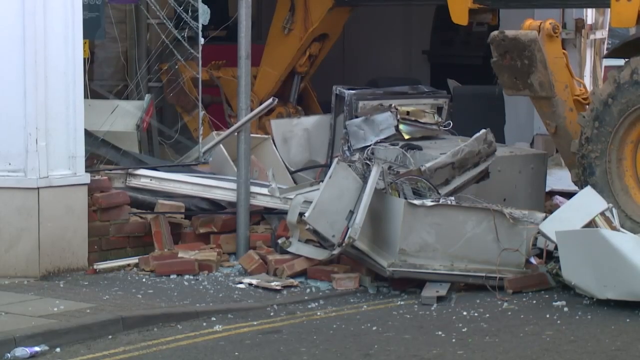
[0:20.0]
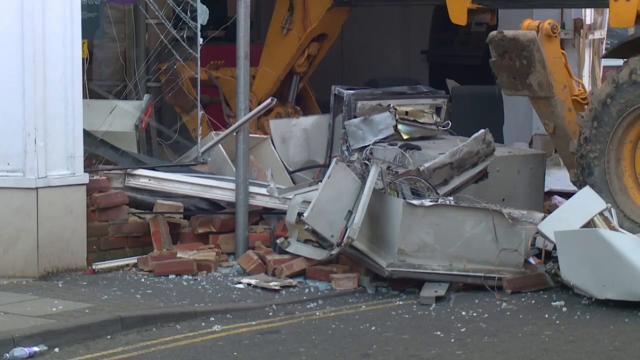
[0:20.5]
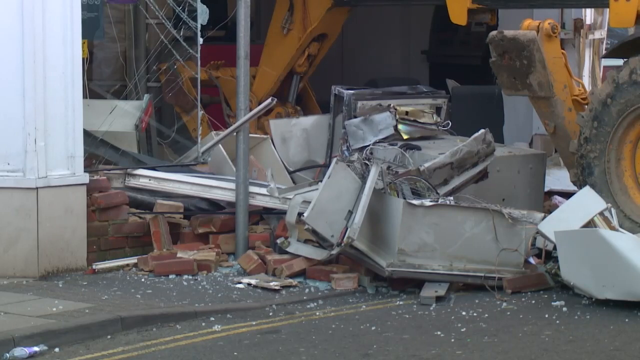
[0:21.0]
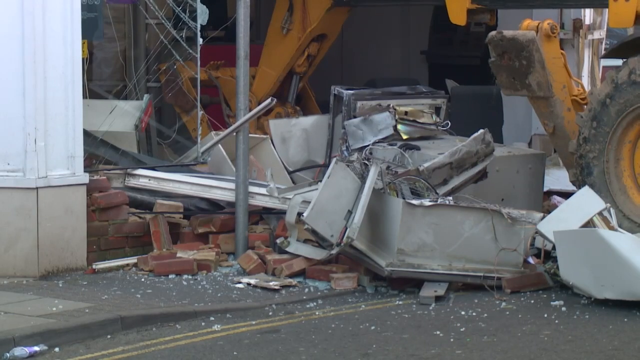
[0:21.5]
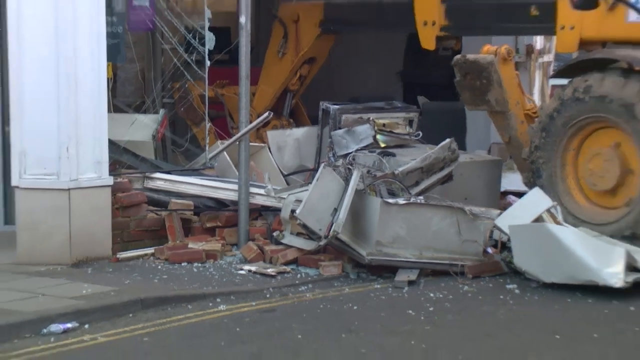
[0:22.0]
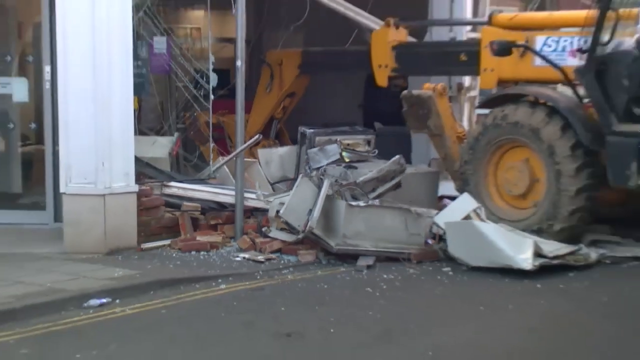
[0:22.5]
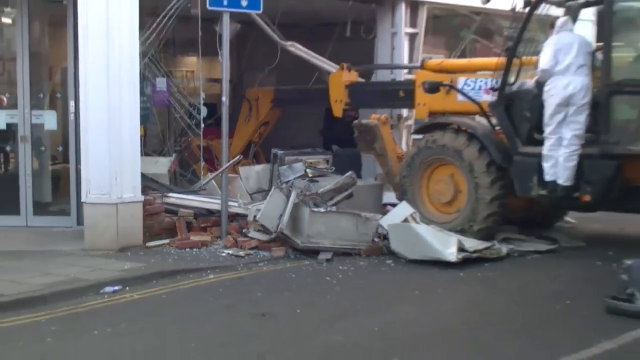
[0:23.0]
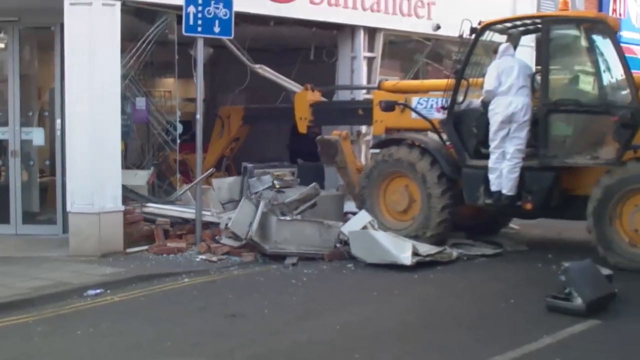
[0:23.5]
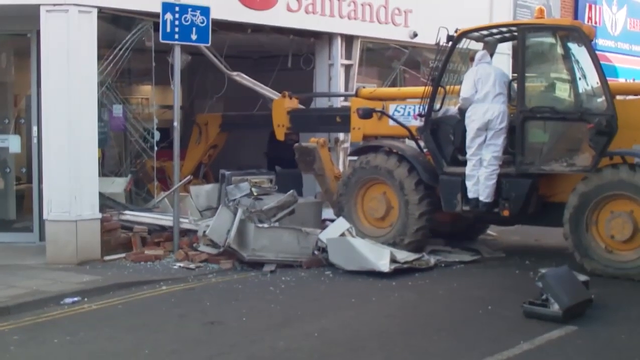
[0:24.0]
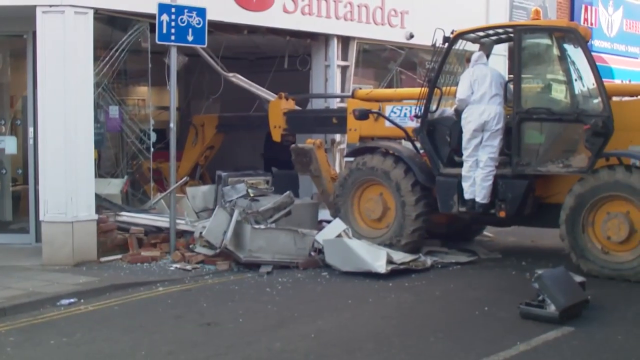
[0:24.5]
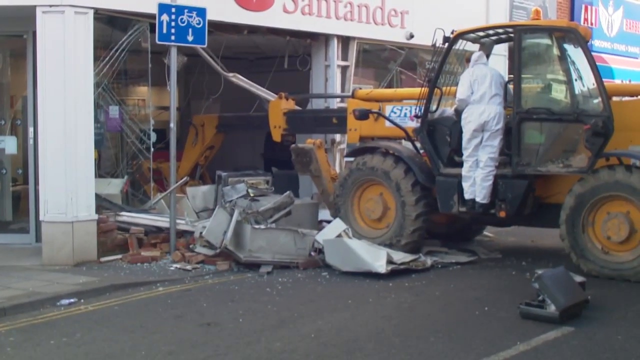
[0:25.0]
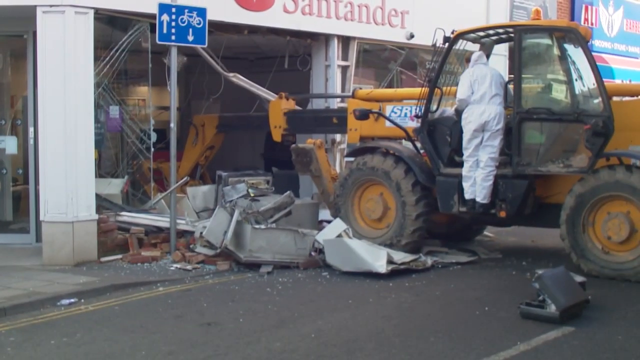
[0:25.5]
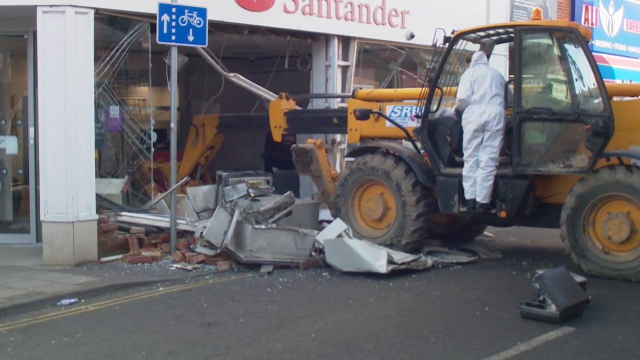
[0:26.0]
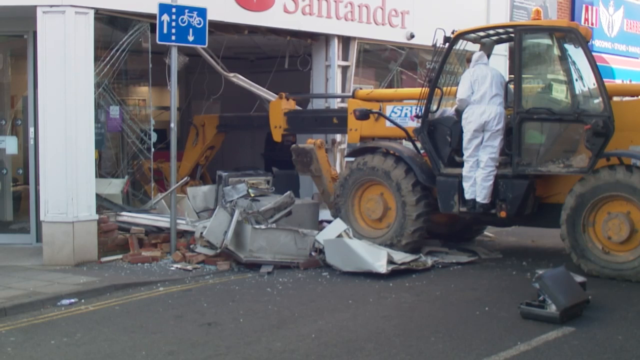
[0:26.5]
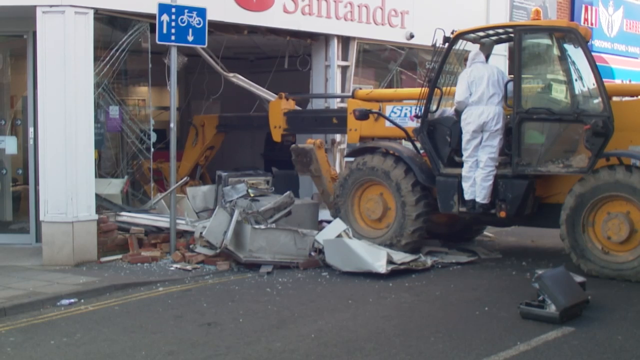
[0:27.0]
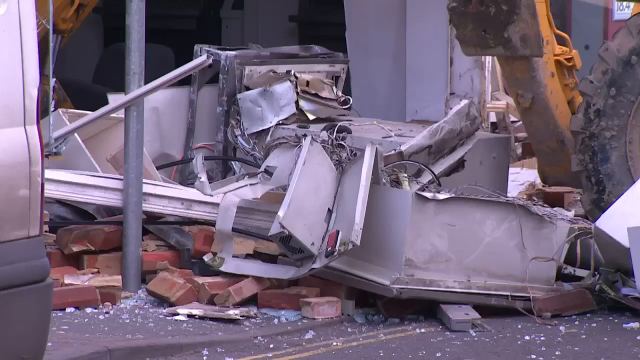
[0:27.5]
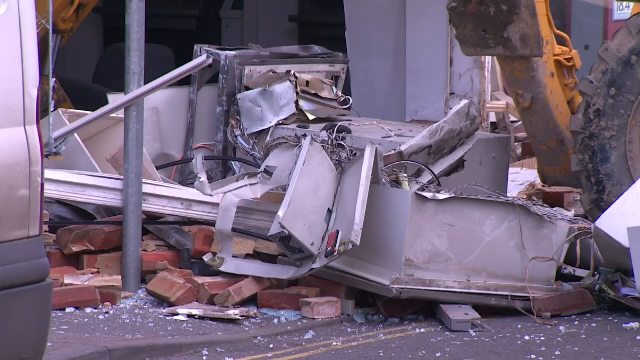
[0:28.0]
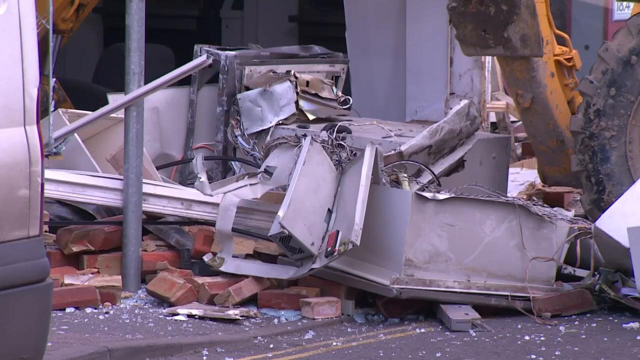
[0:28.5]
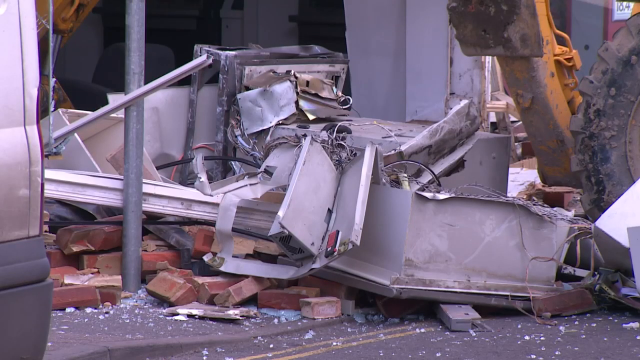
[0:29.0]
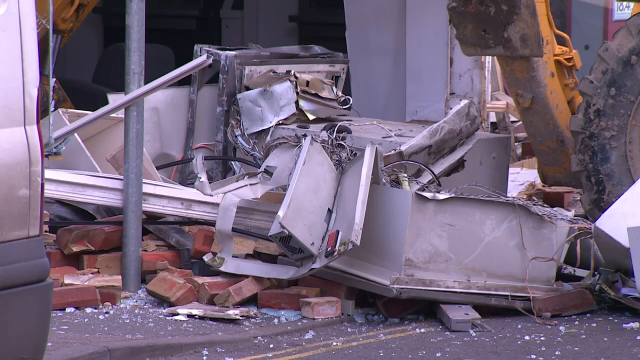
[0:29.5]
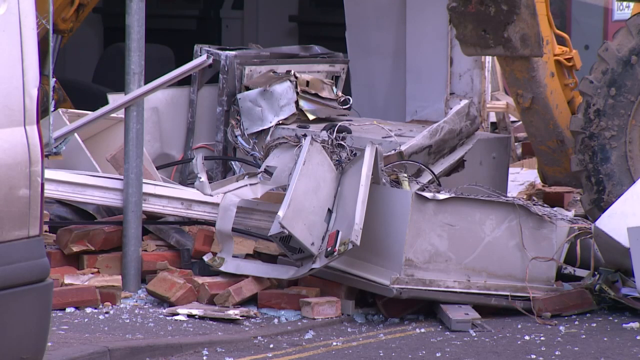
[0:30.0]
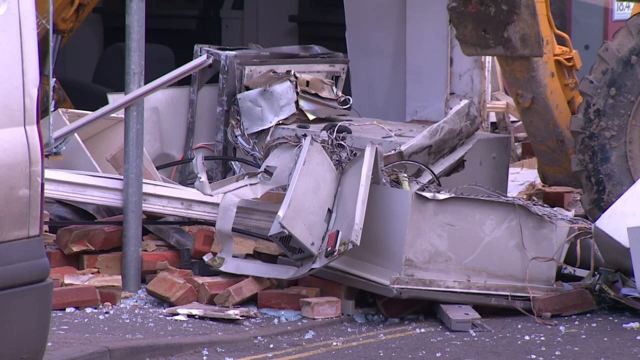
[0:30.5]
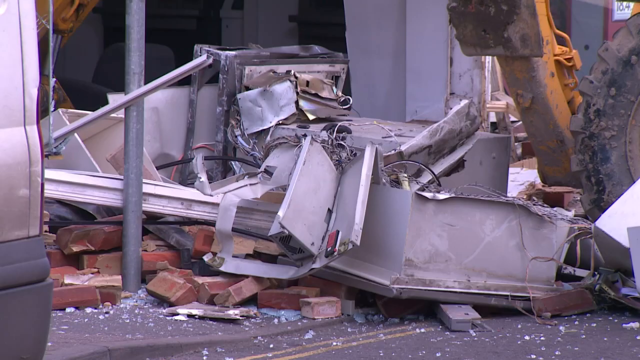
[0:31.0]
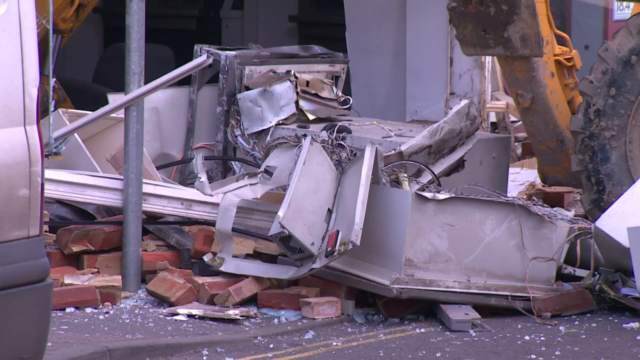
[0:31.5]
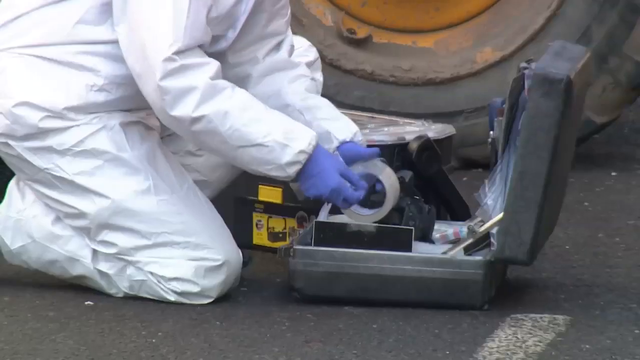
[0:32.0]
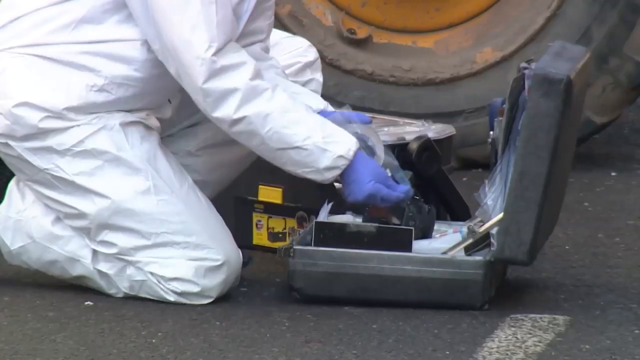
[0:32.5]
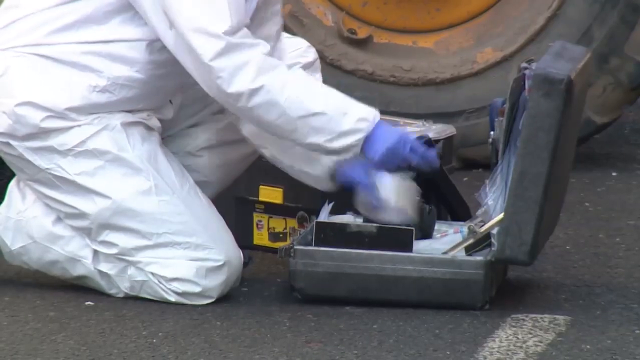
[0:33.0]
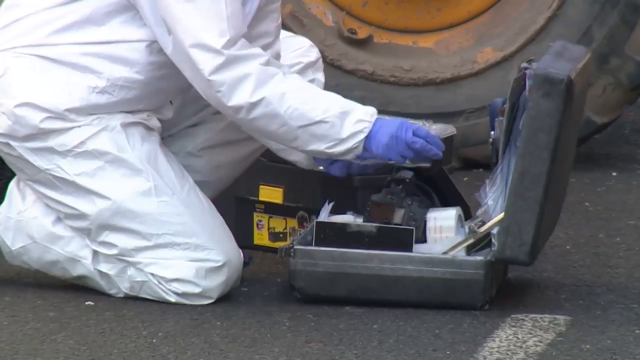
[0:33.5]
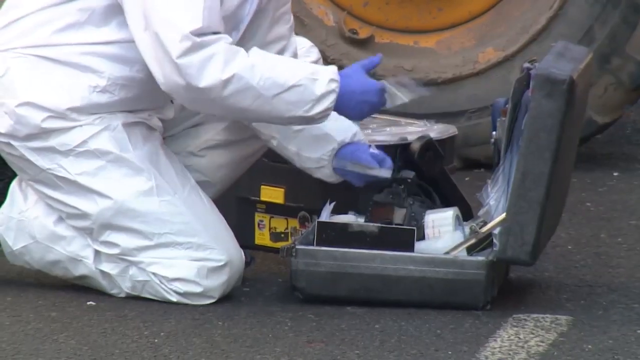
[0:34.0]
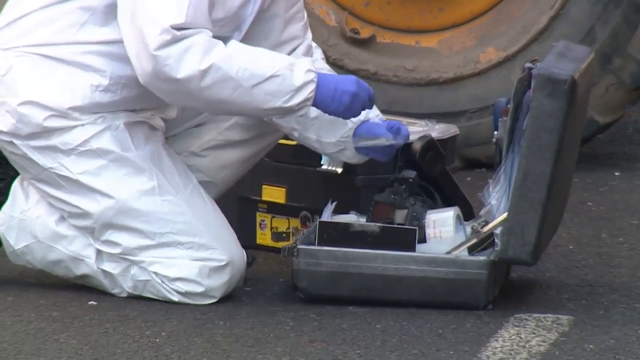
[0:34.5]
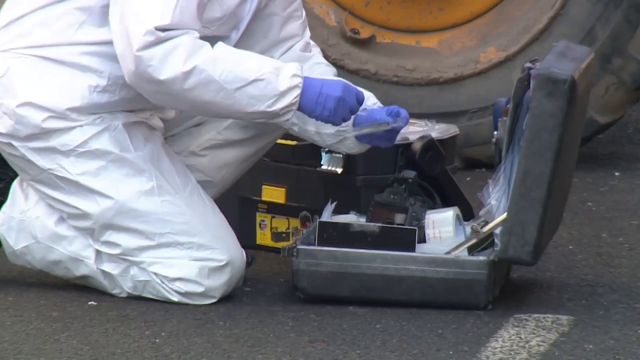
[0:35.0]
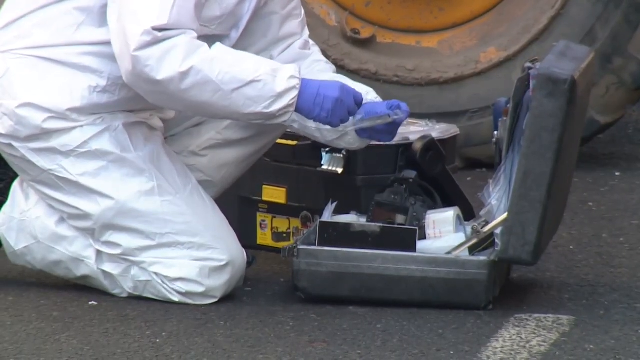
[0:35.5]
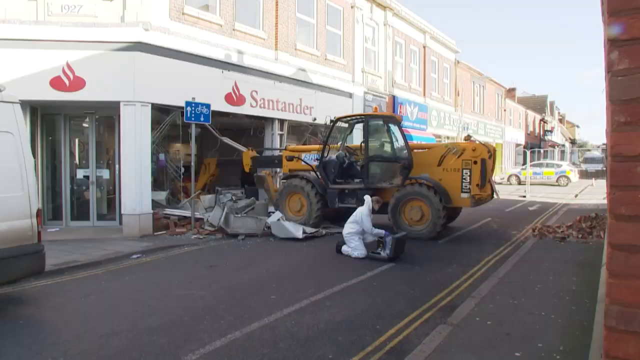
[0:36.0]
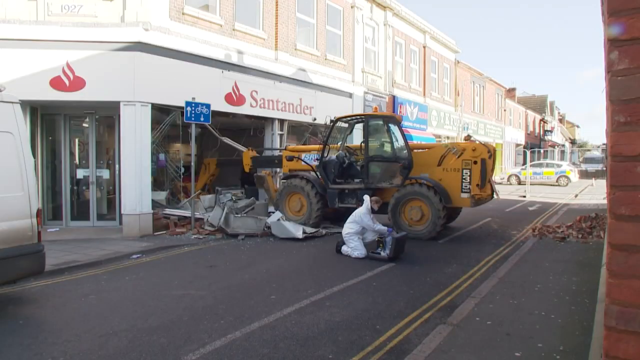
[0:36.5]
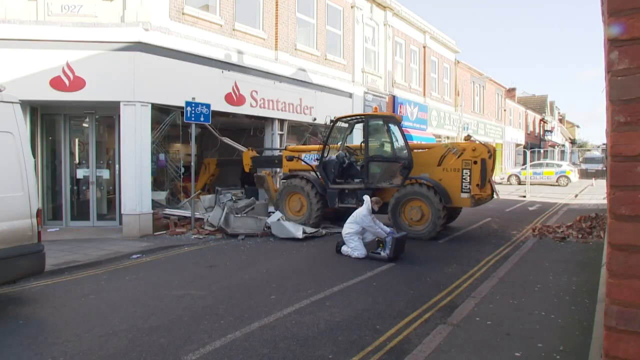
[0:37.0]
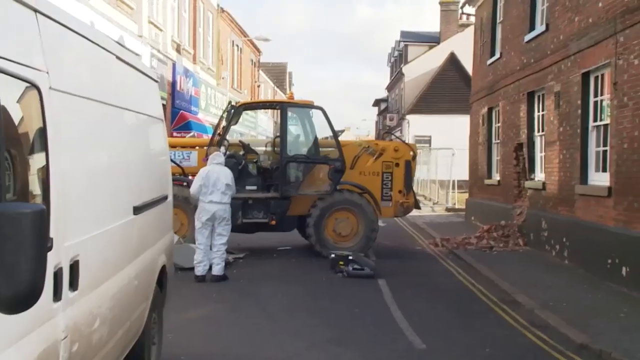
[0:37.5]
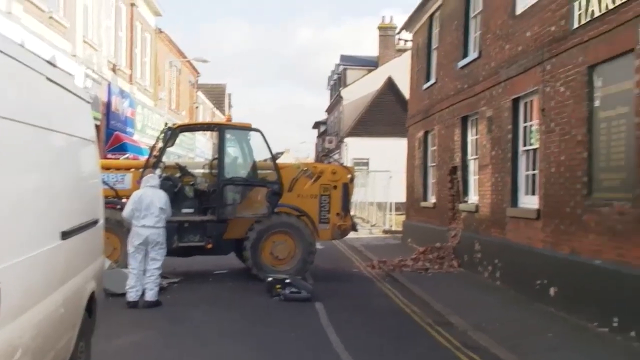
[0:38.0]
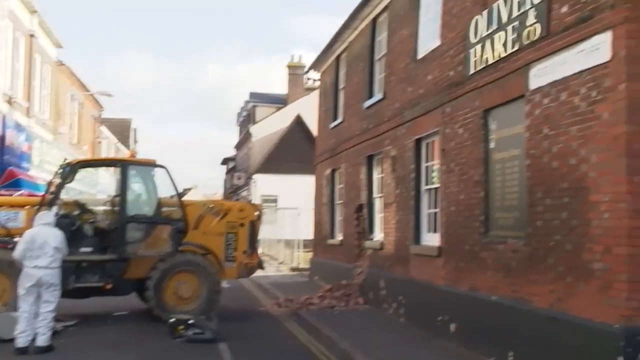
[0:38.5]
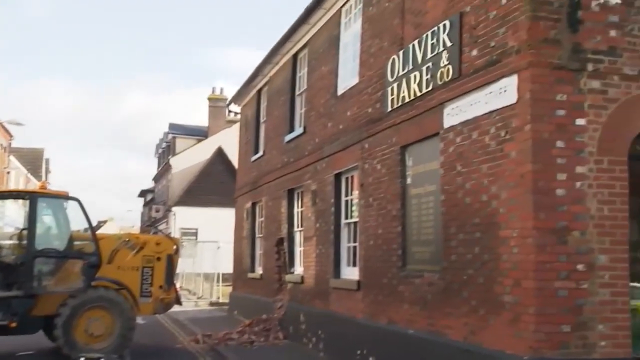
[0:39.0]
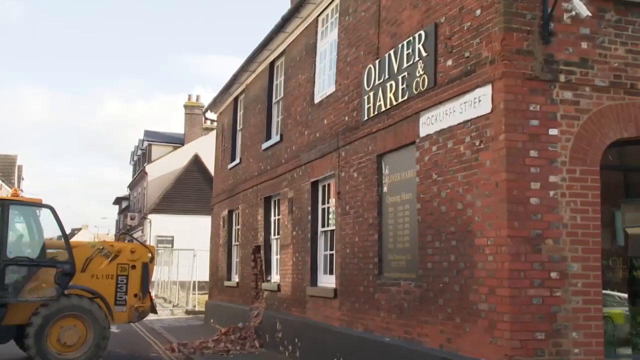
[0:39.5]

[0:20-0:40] At ground level, debris lies where the yellow tractor-like vehicle with the arm ploughed into a building. Charcoal grey cement is visible, and underneath a lot of metal debris there are red bricks on the sidewalk. A silver or grey metal pole is still standing upright on the sidewalk. The camera zooms out to show the scene from afar. A person is standing on the step up into the vehicle, shown from behind, wearing a full-body white suit that covers him from top to bottom and black shoes; he is maybe a forensic individual. The person in the white outfit is then shown leaning on the ground, wearing blue gloves and taking things out of a dark grey suitcase. The suitcase is standing open and is seen from the side; he takes out things that look like plastic bags, and there is a roll of see-through tape in the little suitcase.